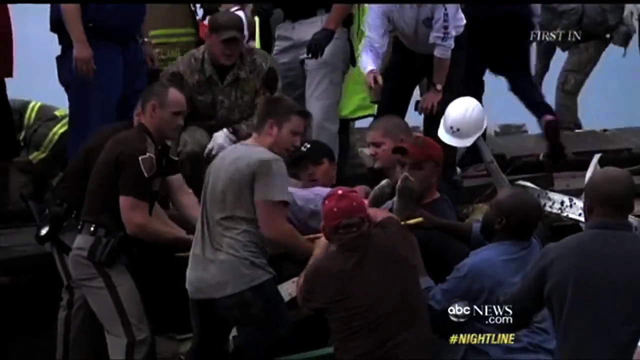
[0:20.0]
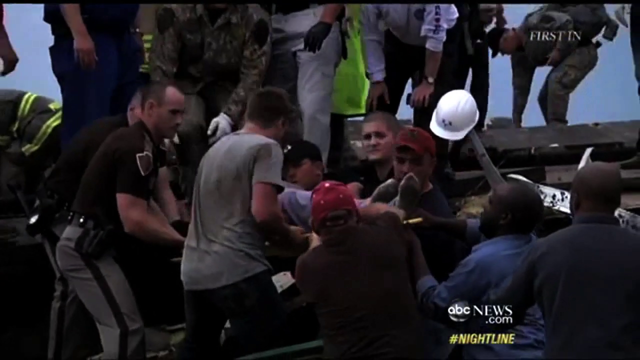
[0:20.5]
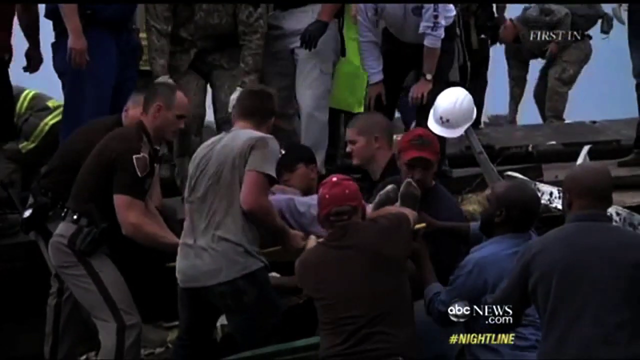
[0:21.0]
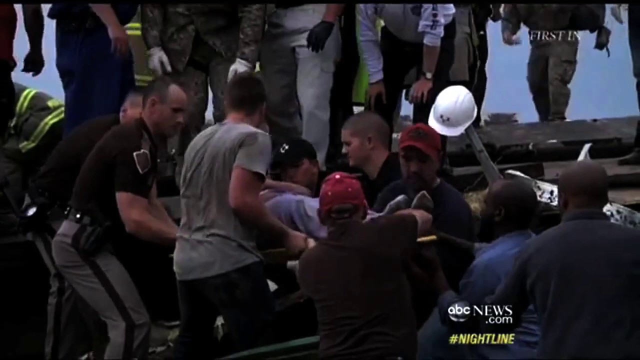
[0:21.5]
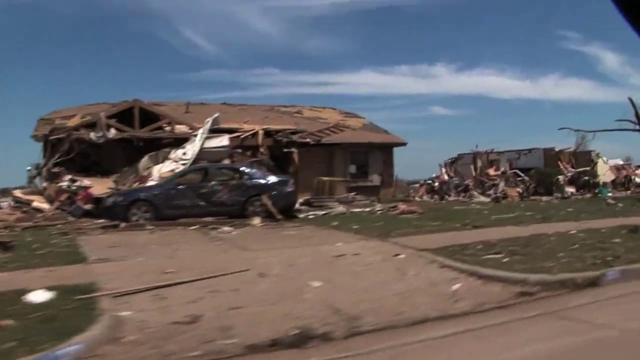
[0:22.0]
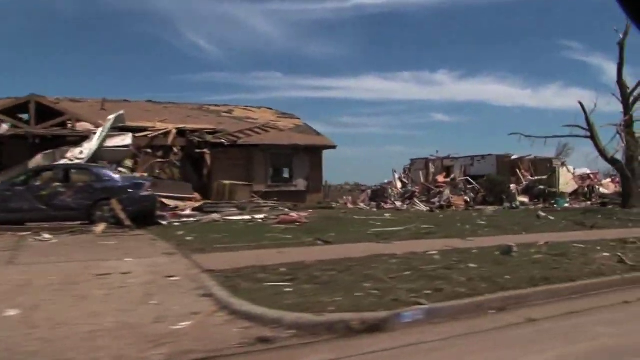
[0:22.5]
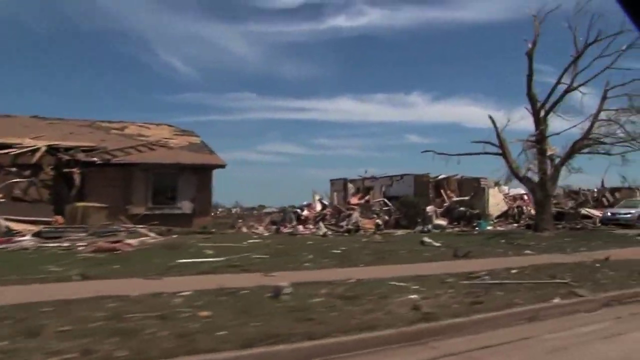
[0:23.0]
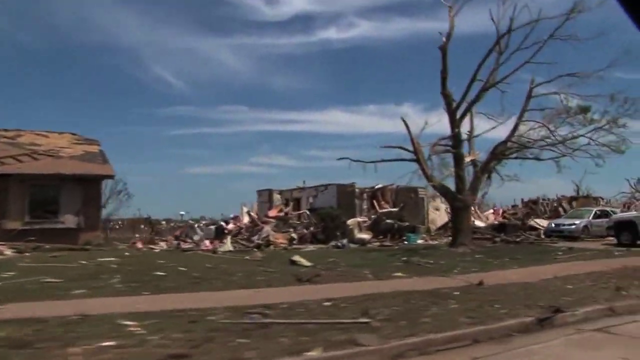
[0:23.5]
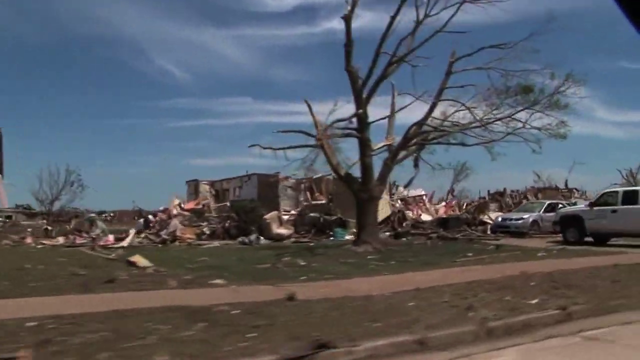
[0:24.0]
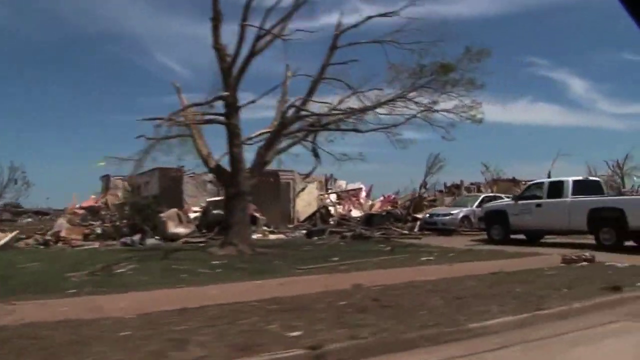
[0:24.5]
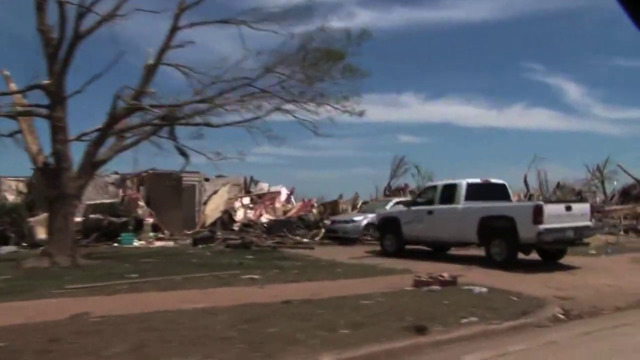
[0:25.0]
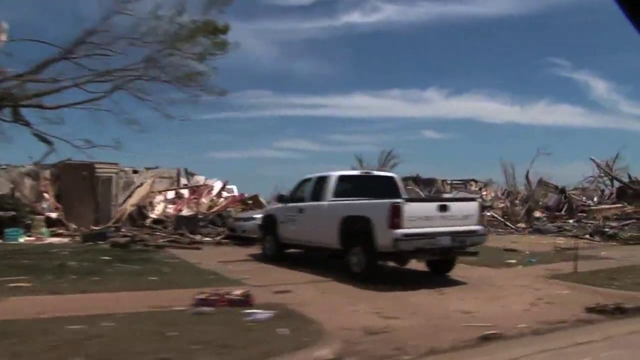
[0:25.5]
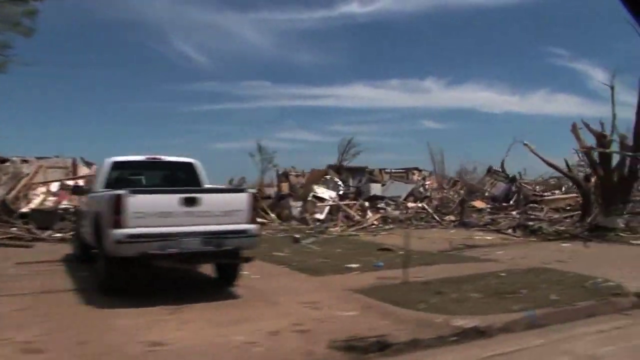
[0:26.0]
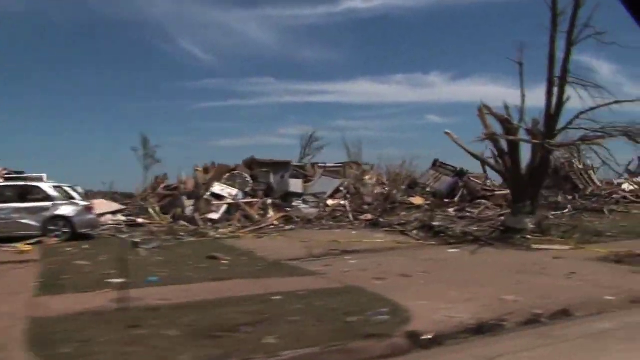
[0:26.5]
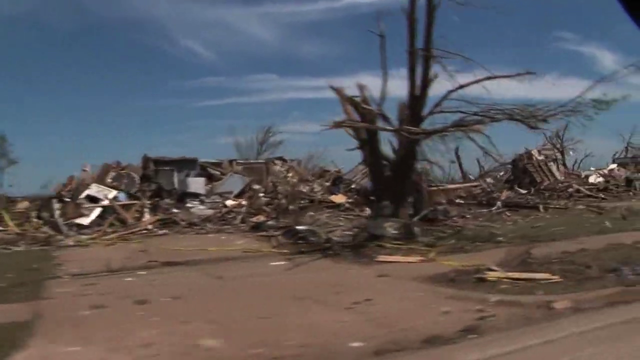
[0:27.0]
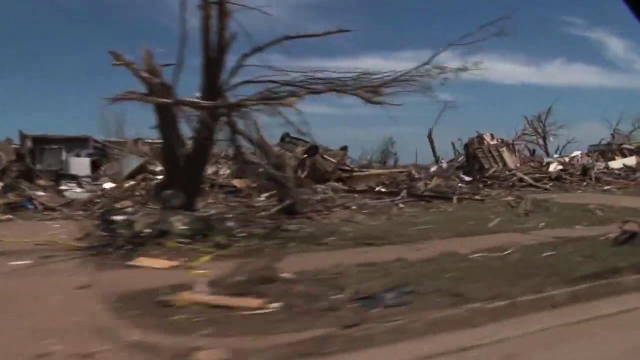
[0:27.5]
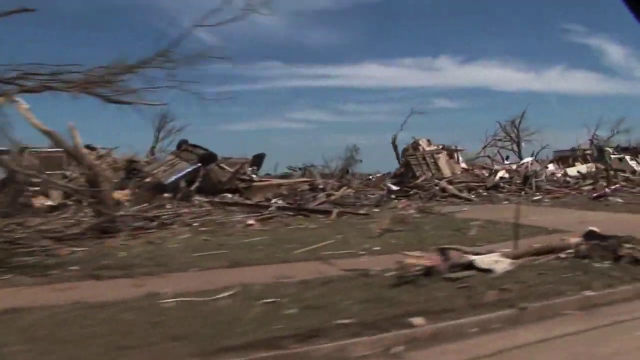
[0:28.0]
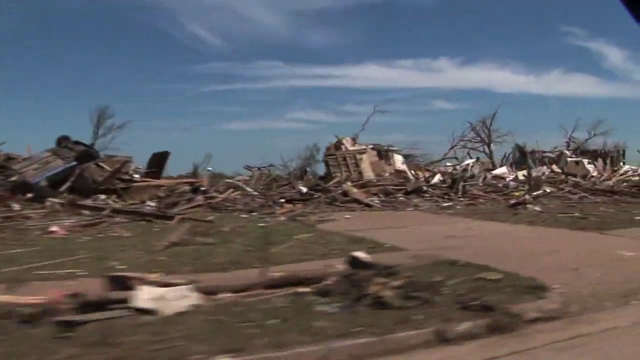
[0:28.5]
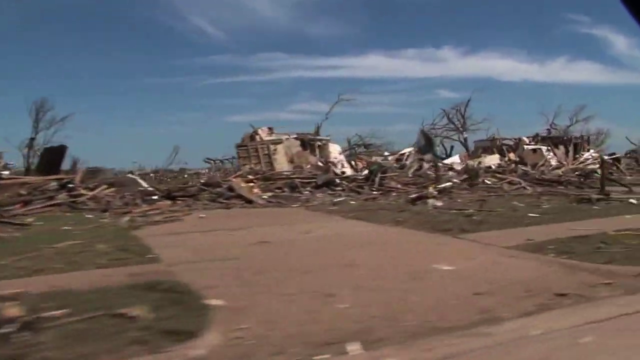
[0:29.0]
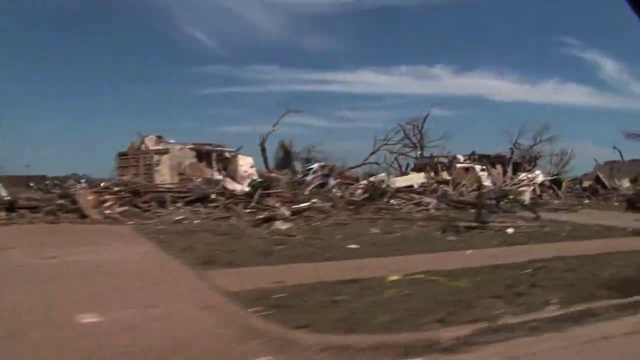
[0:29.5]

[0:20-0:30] Several people assist an individual on a body stretcher who looks like they have passed away, and the footage is marked as reported on abcnews.com #nightline. Policemen are present, along with a man wearing a gray top and black pants and a man wearing a red top. Damaged property continues to appear: a damaged brown house and a navy blue car that is hit on the sides. There are trees, cars and more damaged property, a damaged white car on the side of the road, the side of a house on the ground, and wrecked trees.